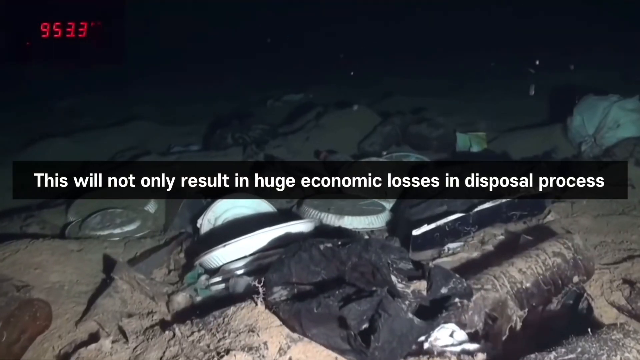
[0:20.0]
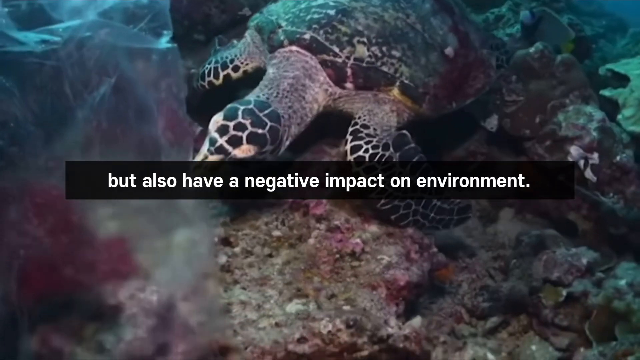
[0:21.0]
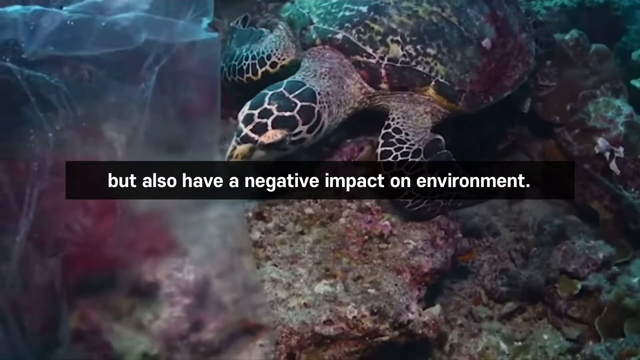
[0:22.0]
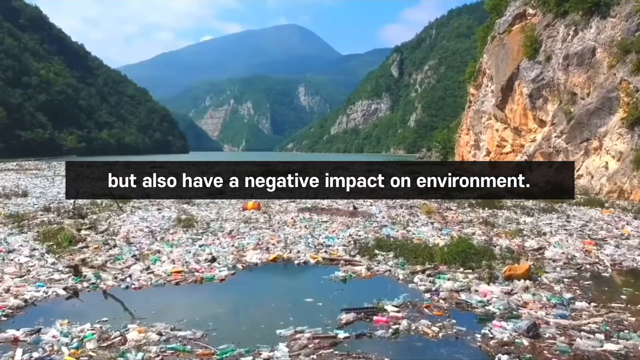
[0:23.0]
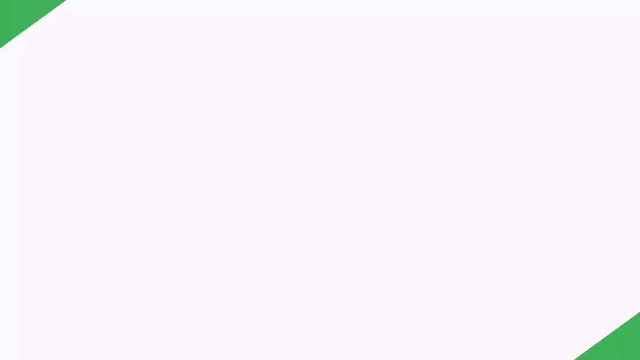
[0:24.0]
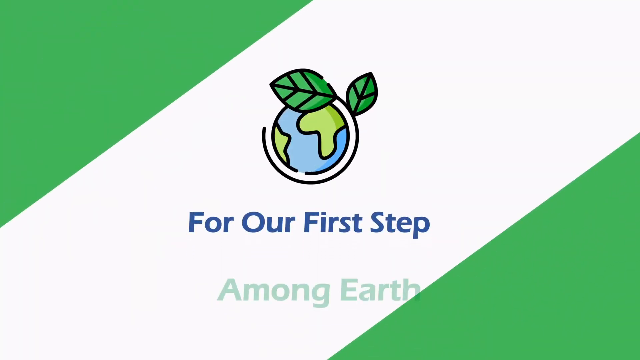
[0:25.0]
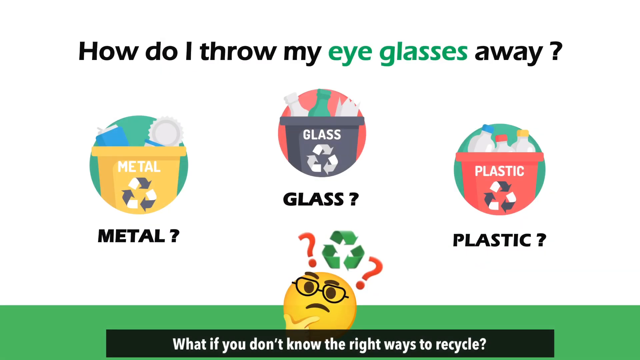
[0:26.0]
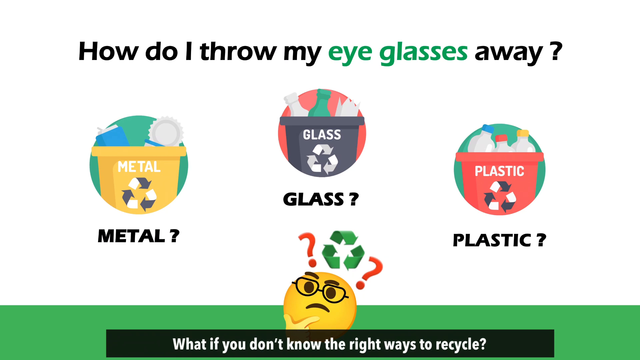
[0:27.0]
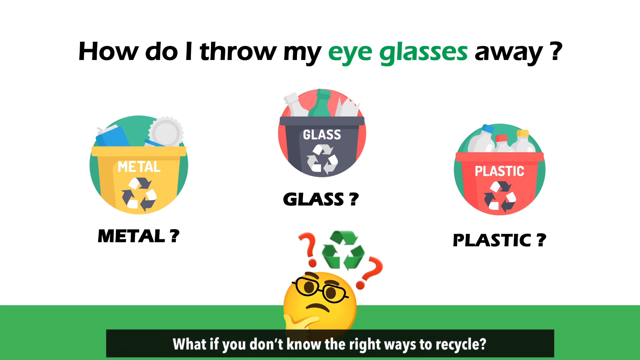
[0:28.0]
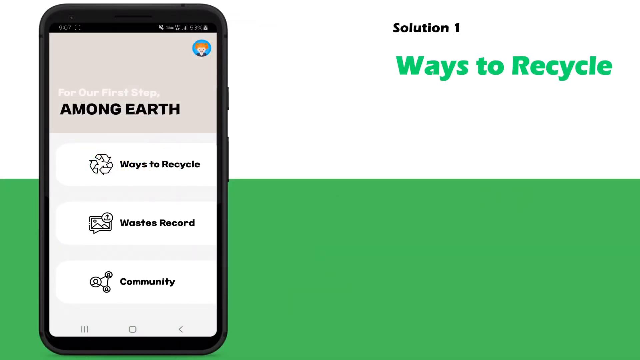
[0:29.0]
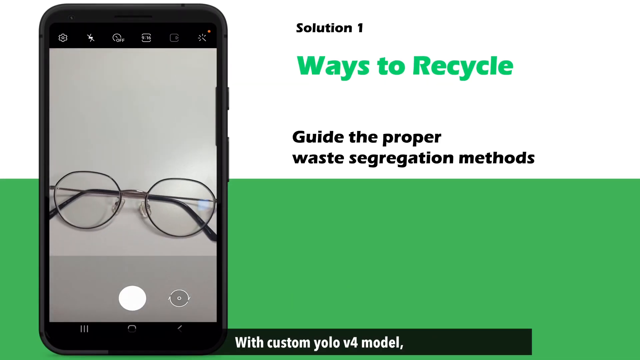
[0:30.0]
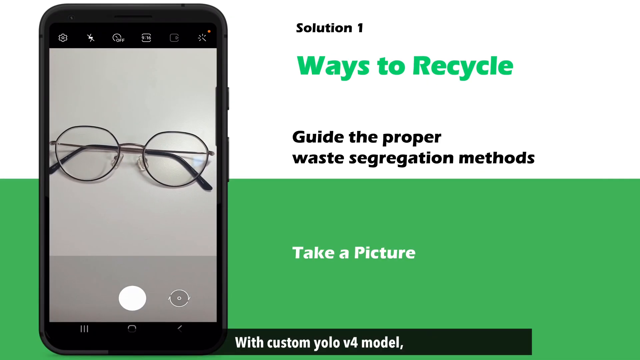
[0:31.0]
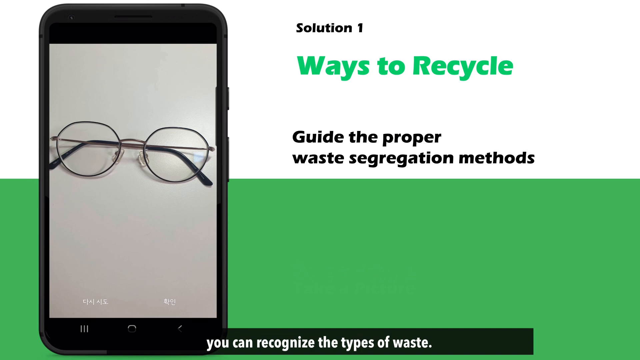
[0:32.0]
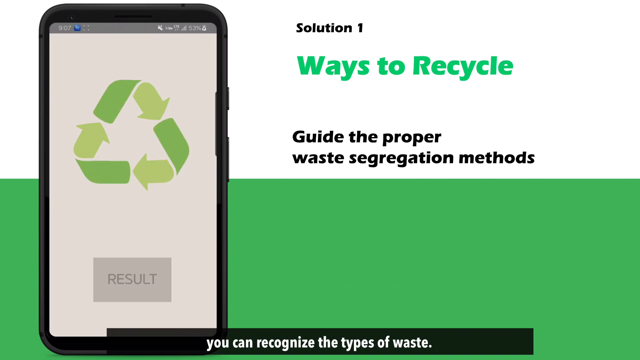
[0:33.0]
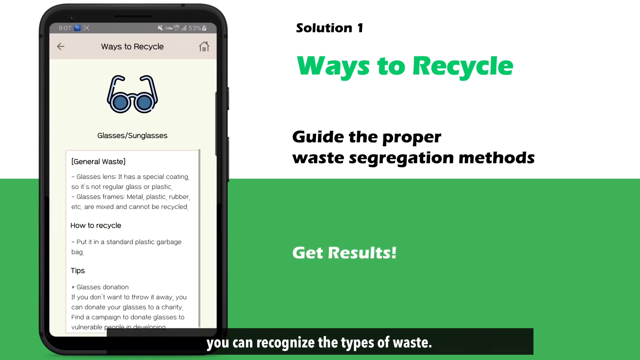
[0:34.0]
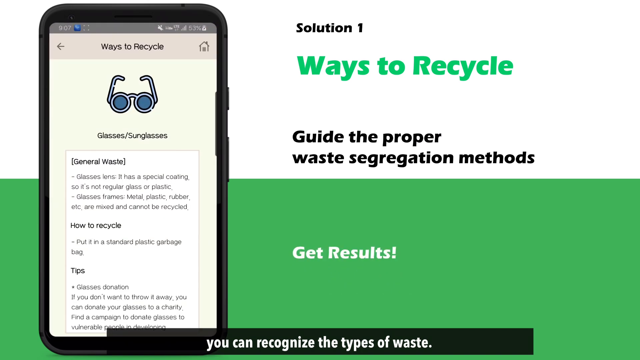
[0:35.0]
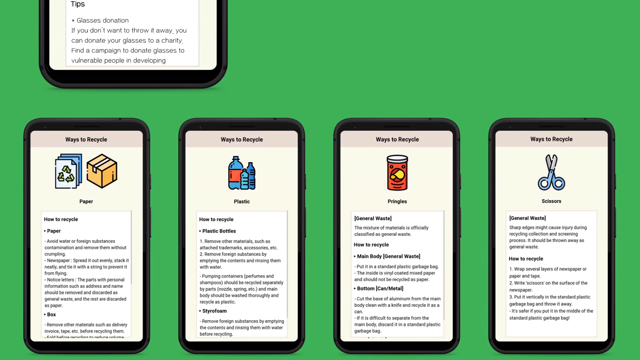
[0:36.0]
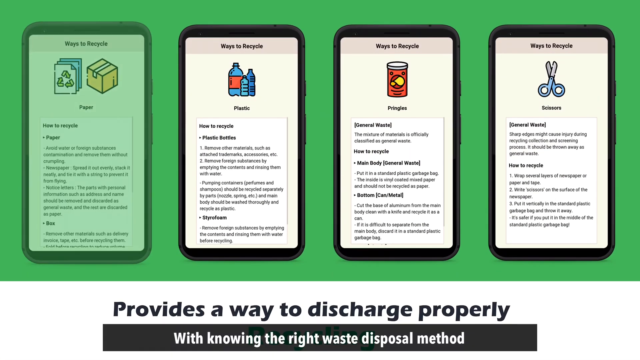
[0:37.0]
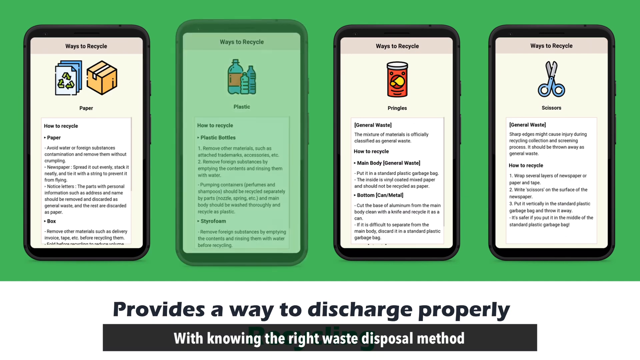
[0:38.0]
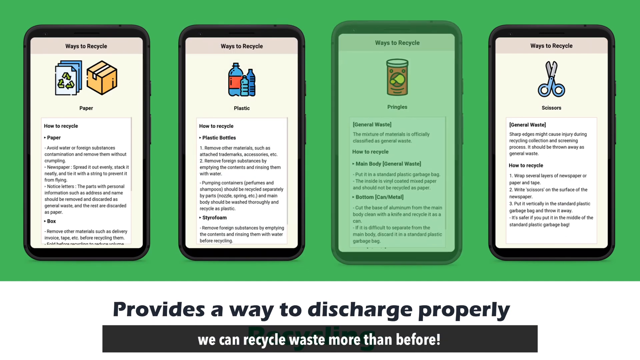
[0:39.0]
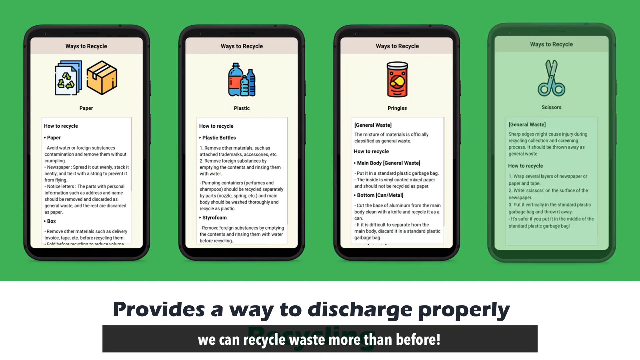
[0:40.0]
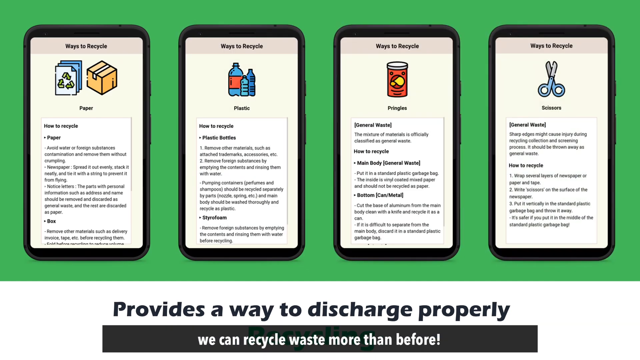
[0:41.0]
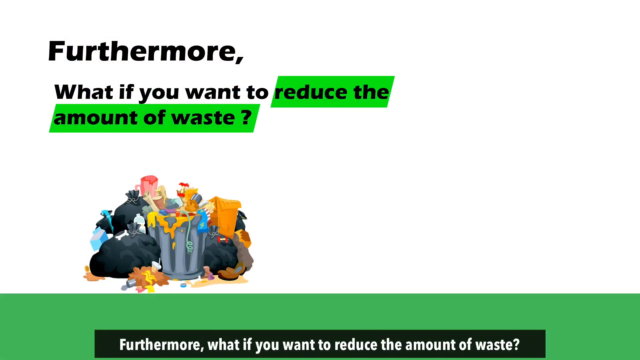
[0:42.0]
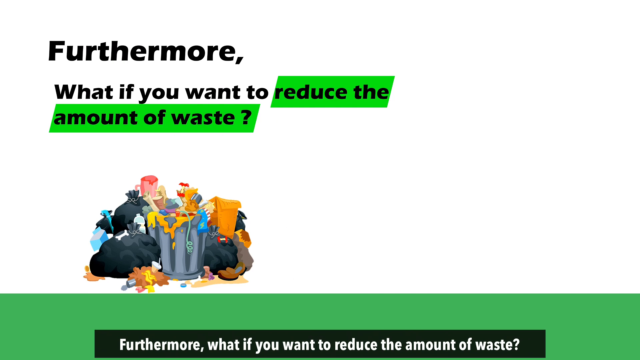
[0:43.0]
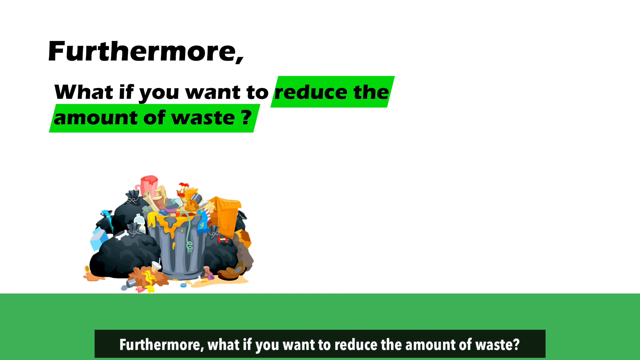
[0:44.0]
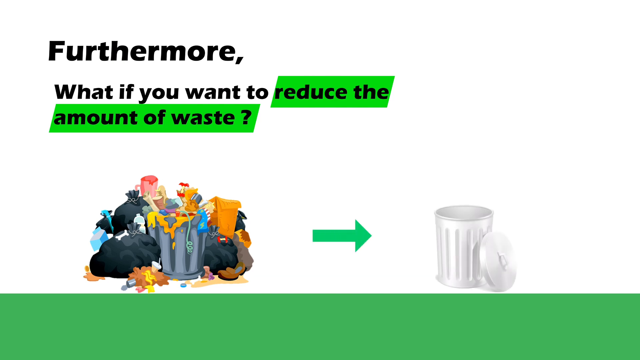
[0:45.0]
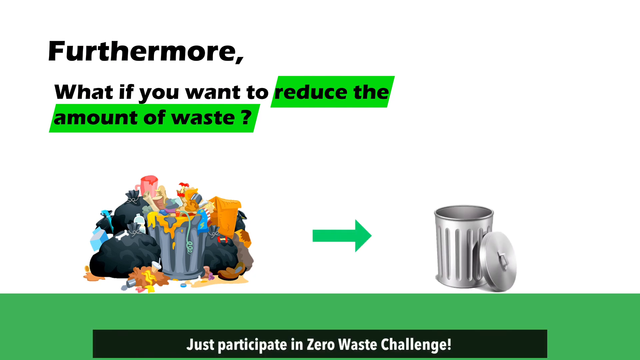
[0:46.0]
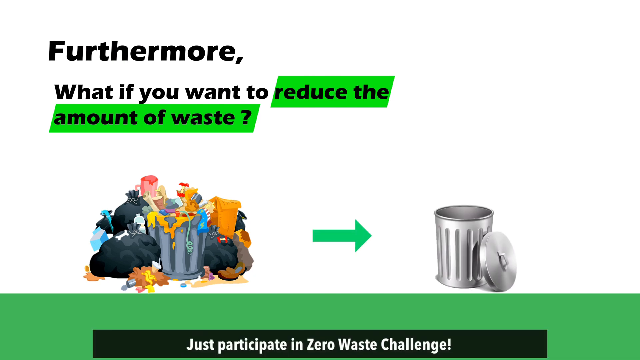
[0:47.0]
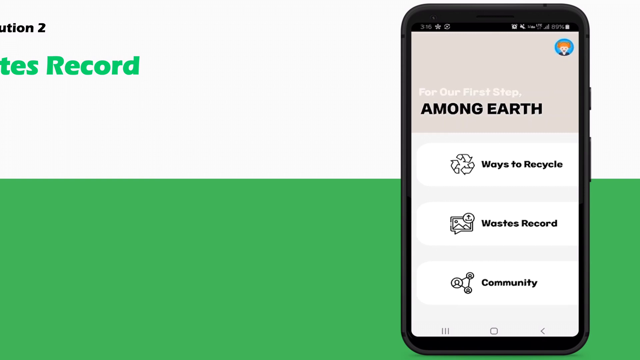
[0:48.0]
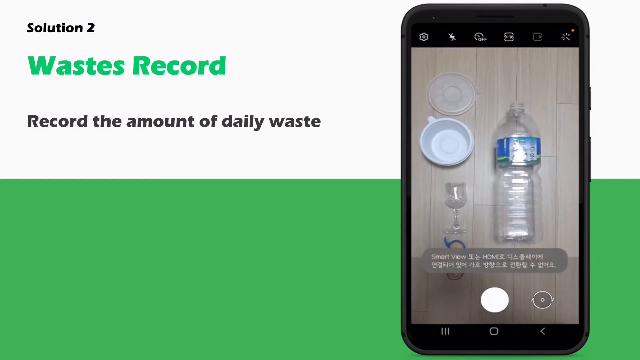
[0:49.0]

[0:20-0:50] What looks like waste floats in a large body of water in the dark, with the caption "this will not only result in huge economic losses in disposal process" in the center. In the top left corner are the numbers "9533", which change. Next, a turtle is in the water with plastic nearby, and the caption in the center reads "but also have a negative impact on environment." The captions may be translations from the broadcasting station. The next scene shows what looks to be more garbage near mountains or large landscapes. The scene pans over to the words "for our first step among Earth", with "for our first step" in blue font and "among Earth" in green font. In the center is a globe with a leaf wrapped around it.